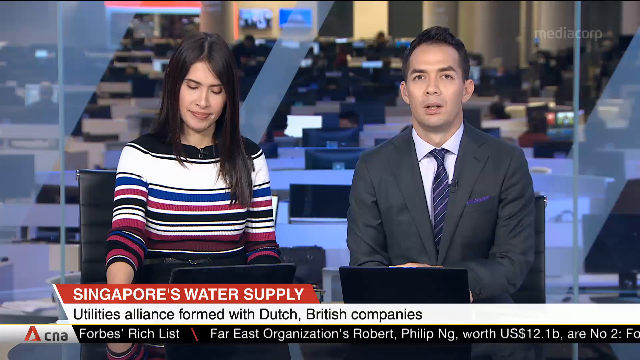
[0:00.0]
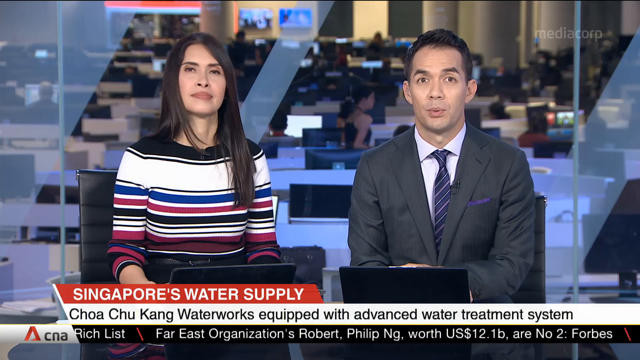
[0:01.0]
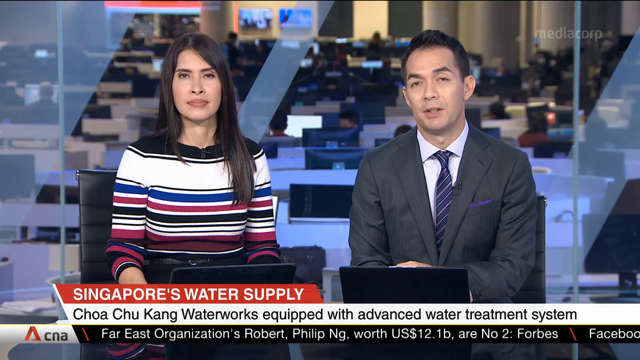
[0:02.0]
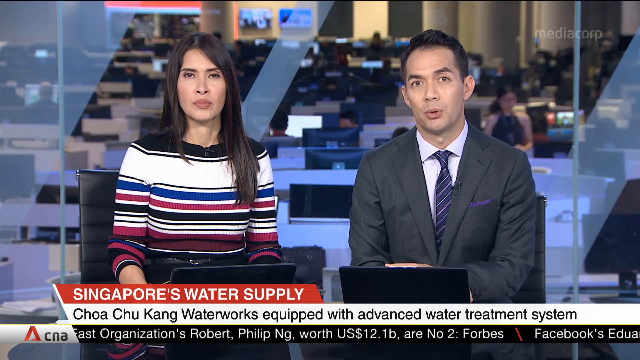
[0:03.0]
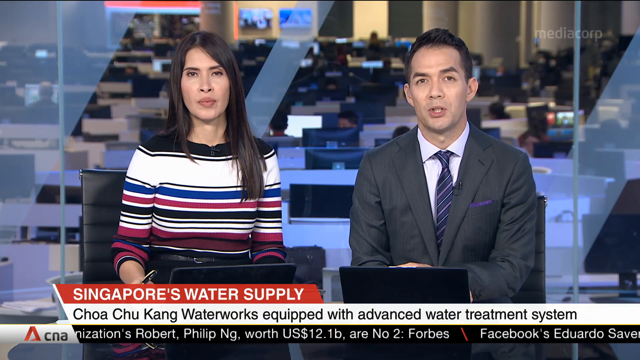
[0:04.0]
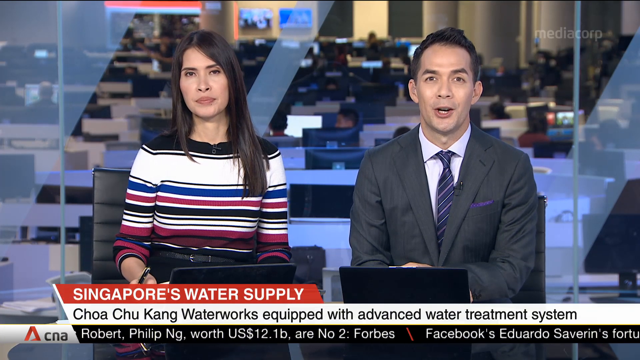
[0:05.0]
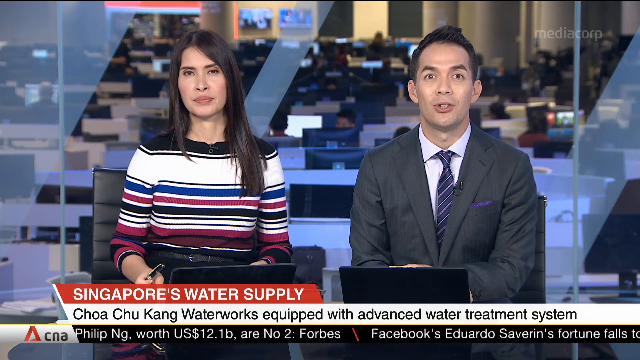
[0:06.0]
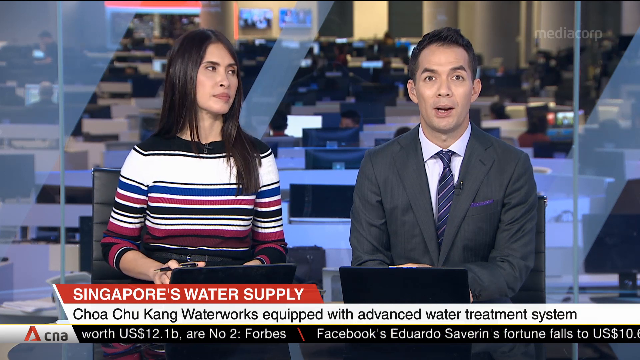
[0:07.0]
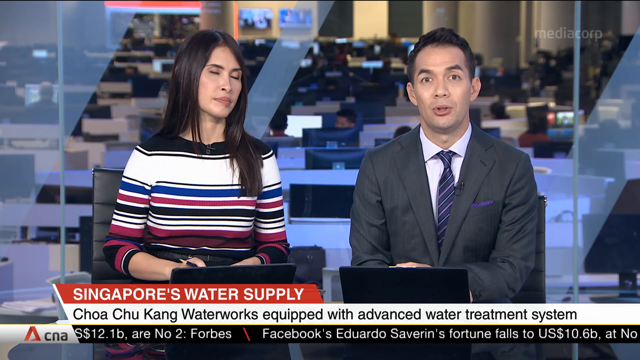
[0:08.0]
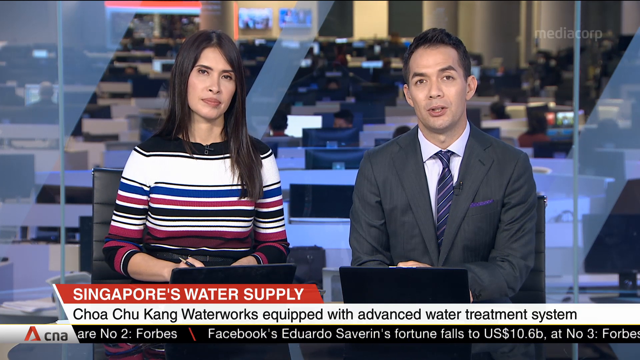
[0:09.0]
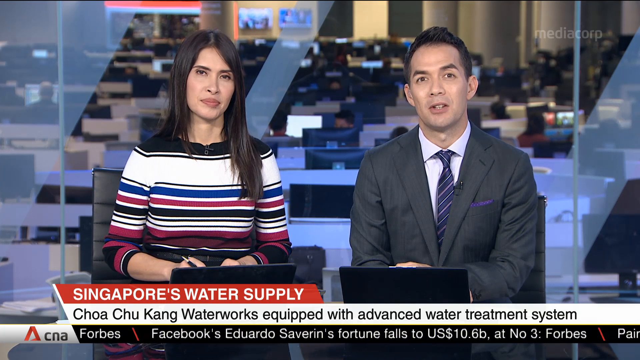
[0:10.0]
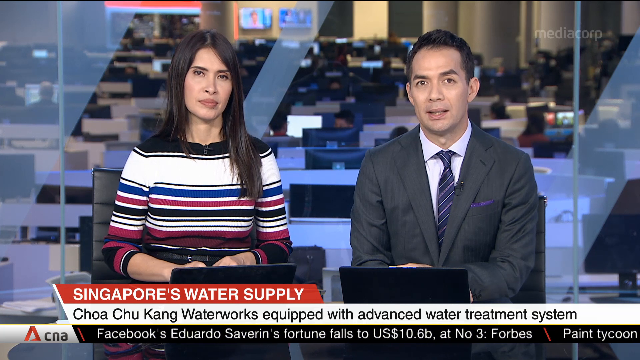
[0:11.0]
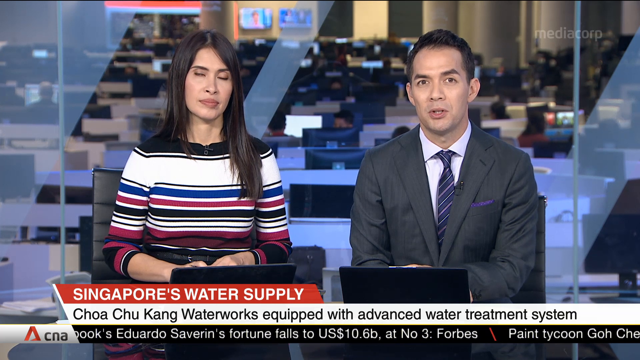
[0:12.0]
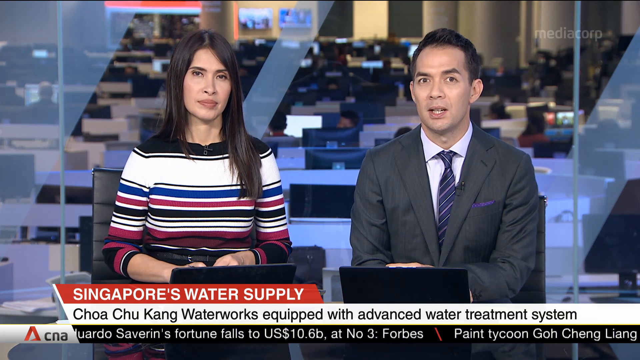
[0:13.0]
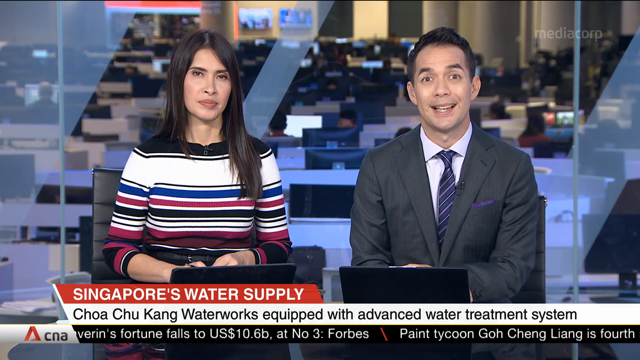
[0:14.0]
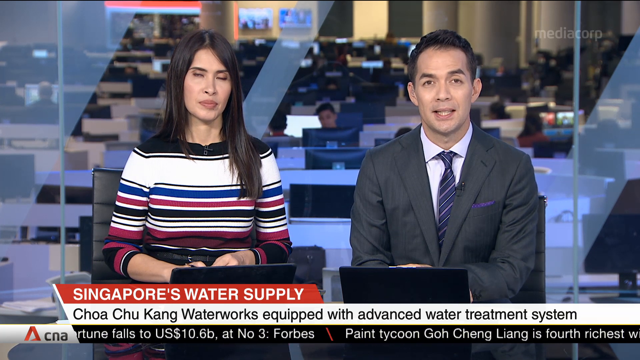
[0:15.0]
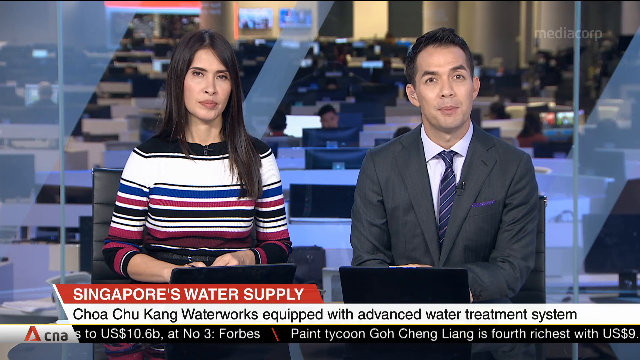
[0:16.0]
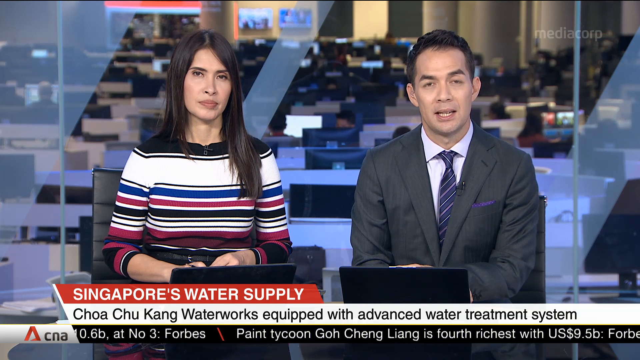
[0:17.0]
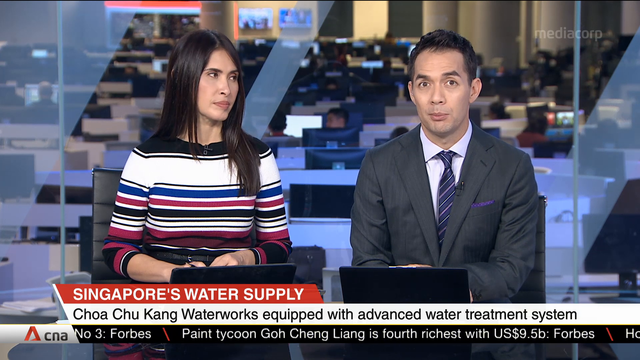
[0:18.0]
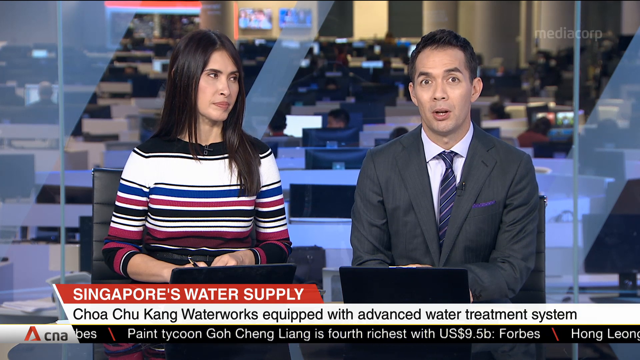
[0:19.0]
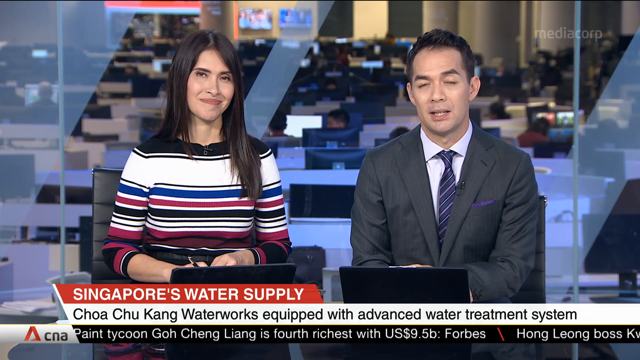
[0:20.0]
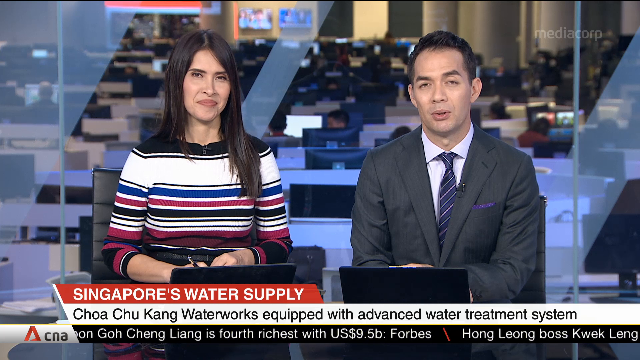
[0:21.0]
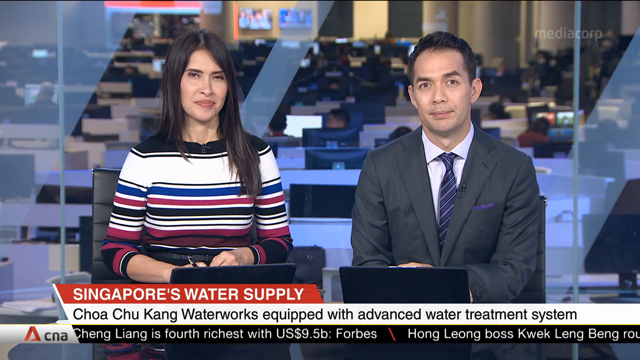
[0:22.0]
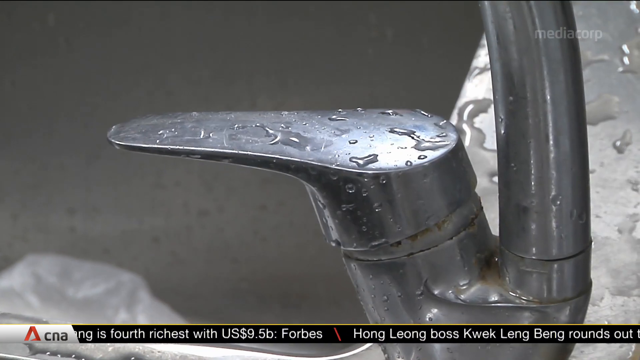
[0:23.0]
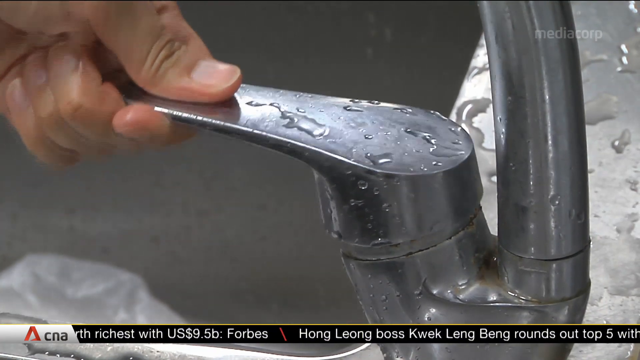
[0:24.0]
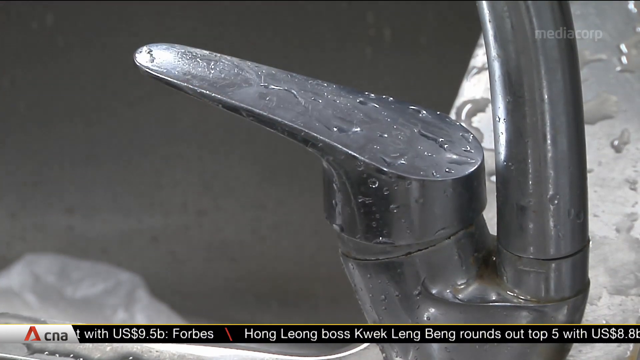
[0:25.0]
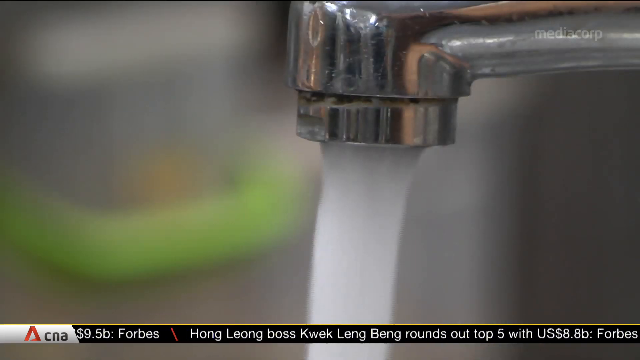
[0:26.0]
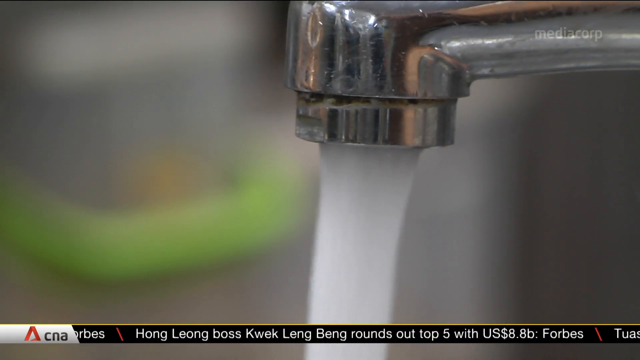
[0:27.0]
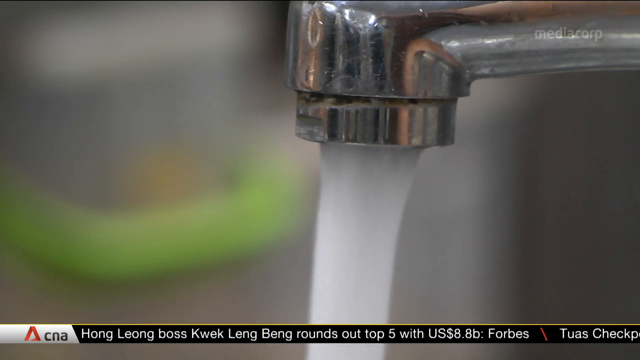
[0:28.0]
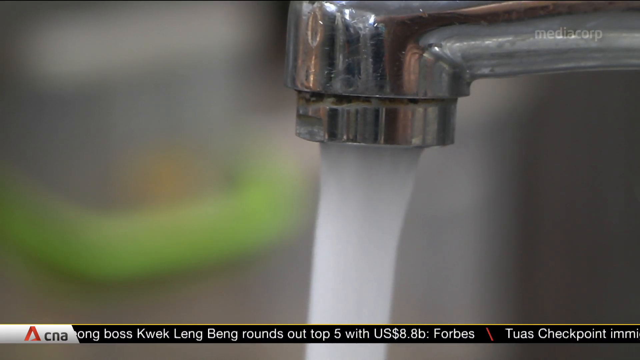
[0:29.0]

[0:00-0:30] The video opens in a newsroom. A female newsreader with long hair and a striped jumper is on the left of the screen, and a male newsreader in a suit with a blue tie and a blue pocket square is on the right. Each has a laptop open in front of them. Behind them is the newsroom with computer screens, and a few people are in the back. A headline in white writing on a red background reads "Singapore's water supply", and below it, in black writing on a white background, is "Utilities Alliance formed with Dutch, British companies". The male newsreader is talking, while the female newsreader looks to the camera, occasionally turns to look at him, and smiles. The video then cuts to a close-up of a tap: someone turns it on, water comes out, and the water runs down the drain.